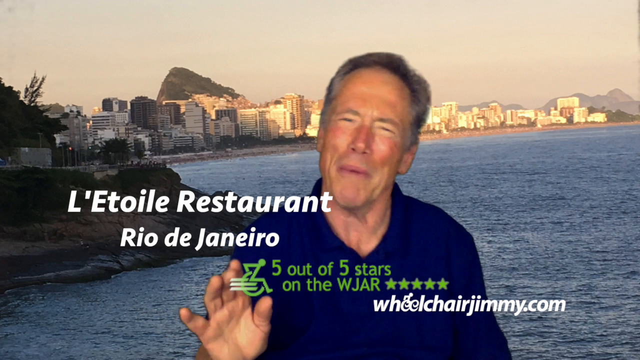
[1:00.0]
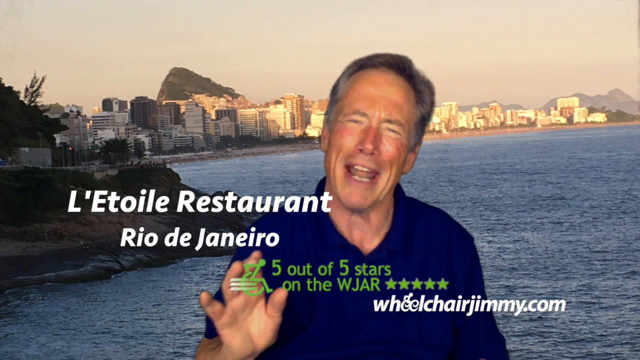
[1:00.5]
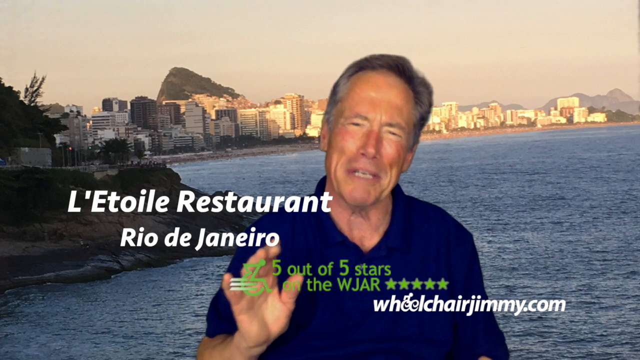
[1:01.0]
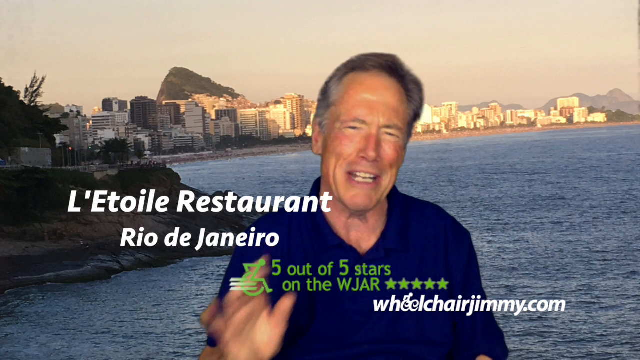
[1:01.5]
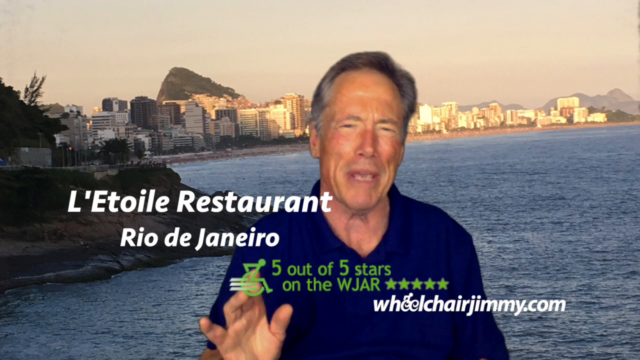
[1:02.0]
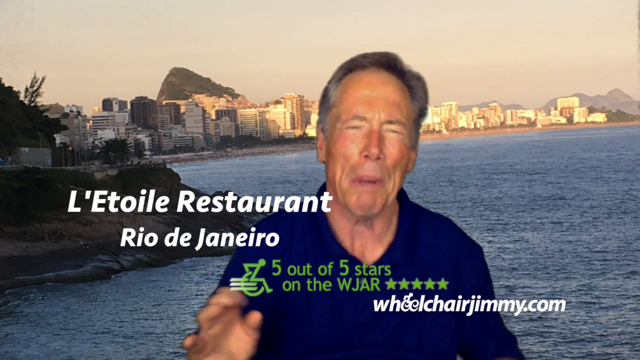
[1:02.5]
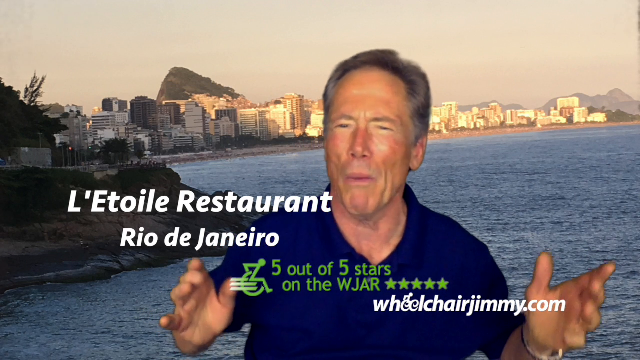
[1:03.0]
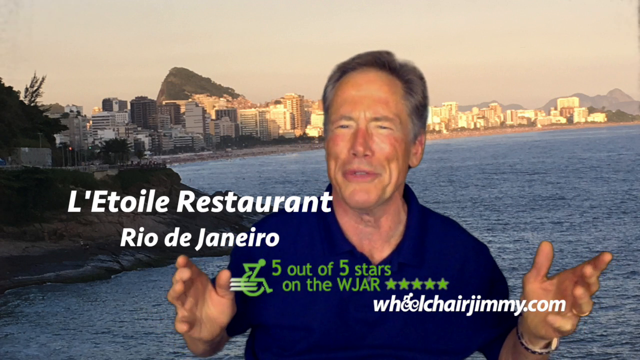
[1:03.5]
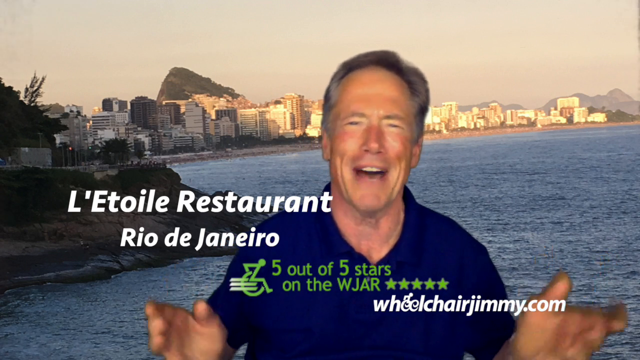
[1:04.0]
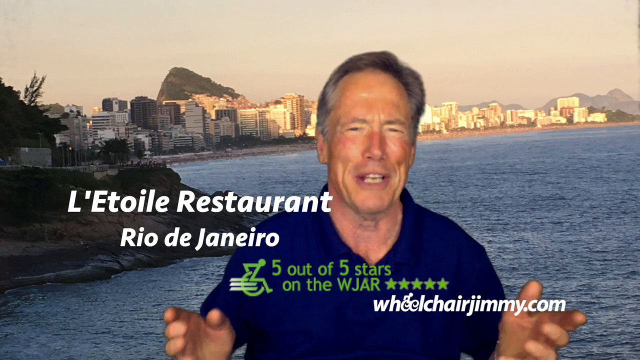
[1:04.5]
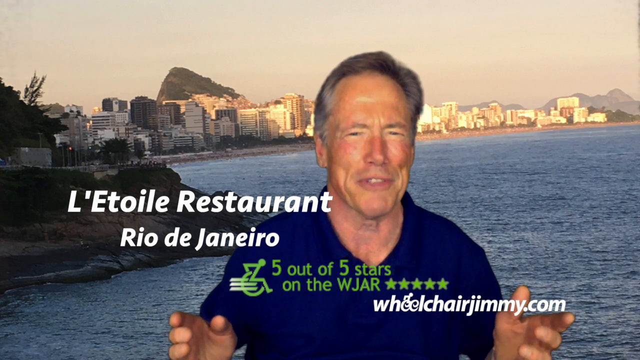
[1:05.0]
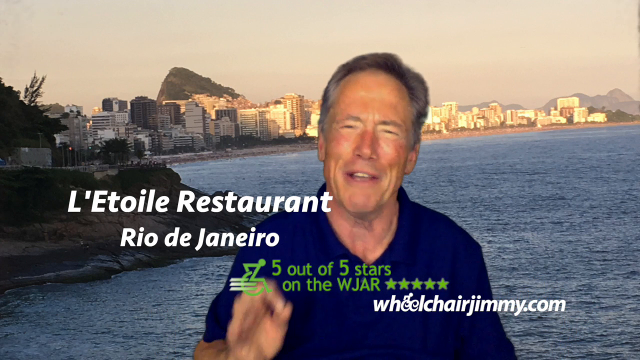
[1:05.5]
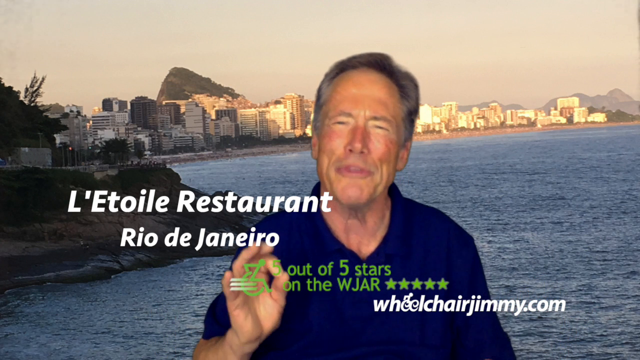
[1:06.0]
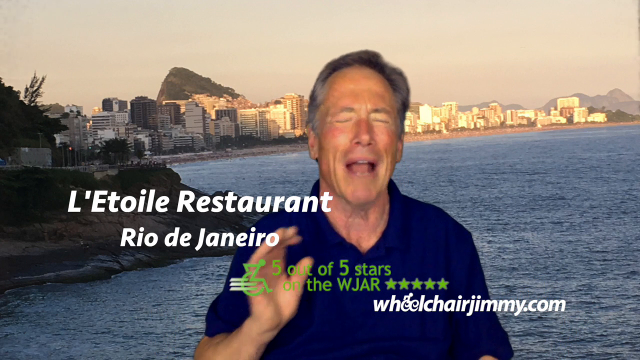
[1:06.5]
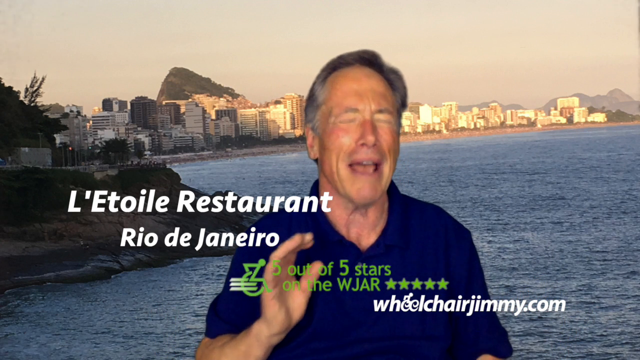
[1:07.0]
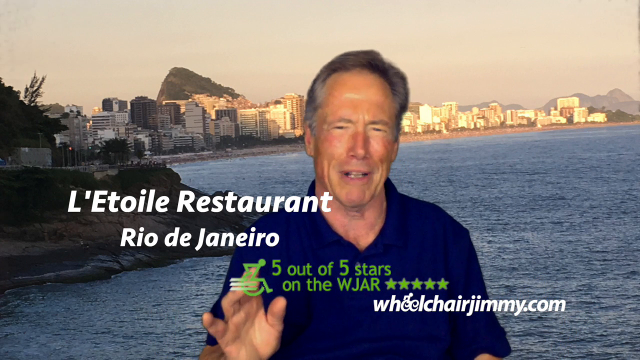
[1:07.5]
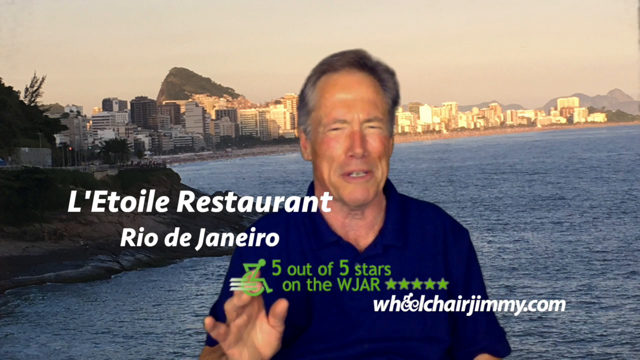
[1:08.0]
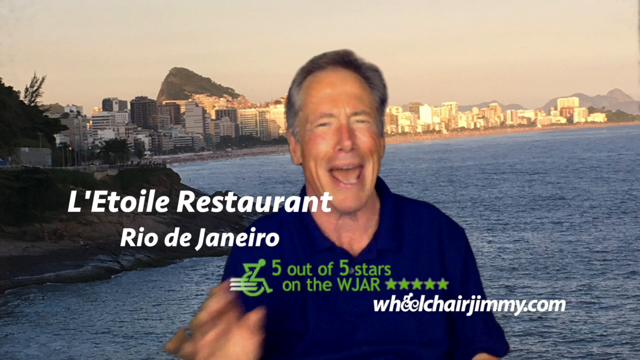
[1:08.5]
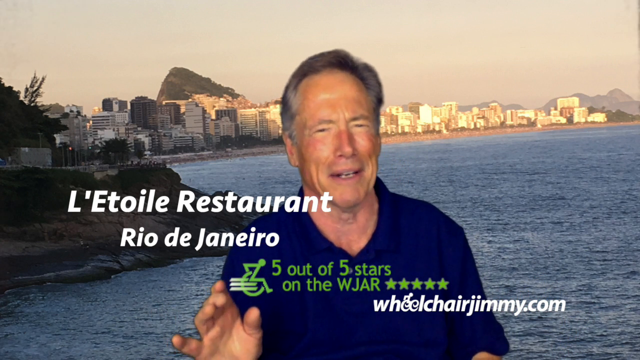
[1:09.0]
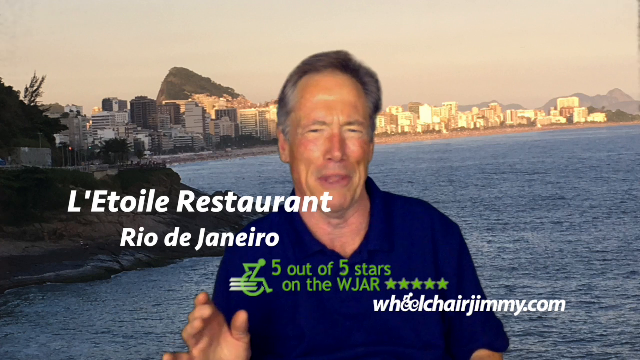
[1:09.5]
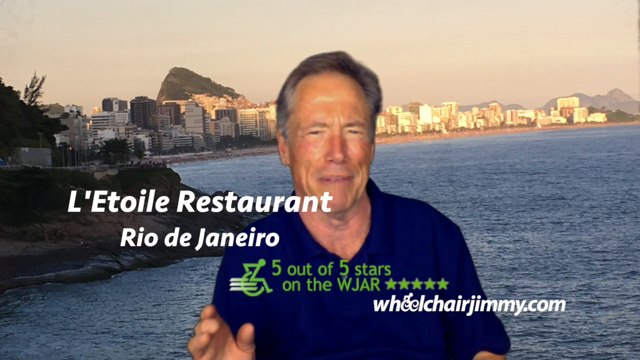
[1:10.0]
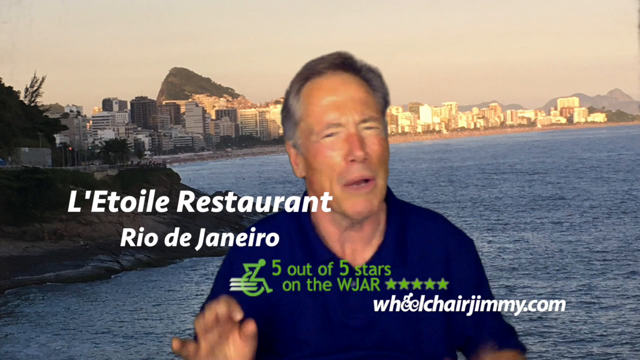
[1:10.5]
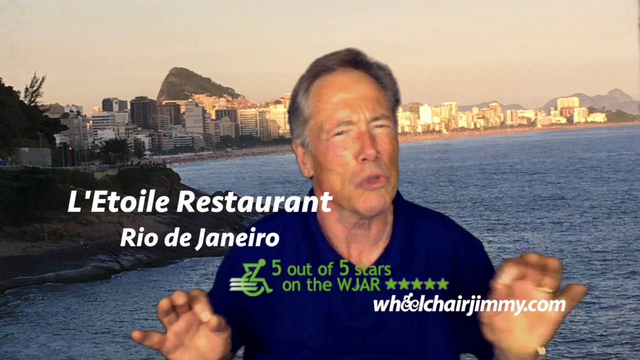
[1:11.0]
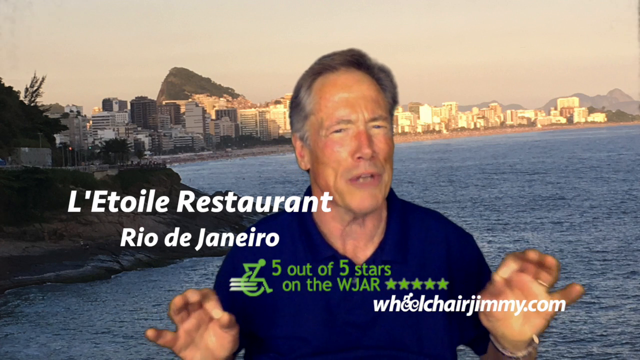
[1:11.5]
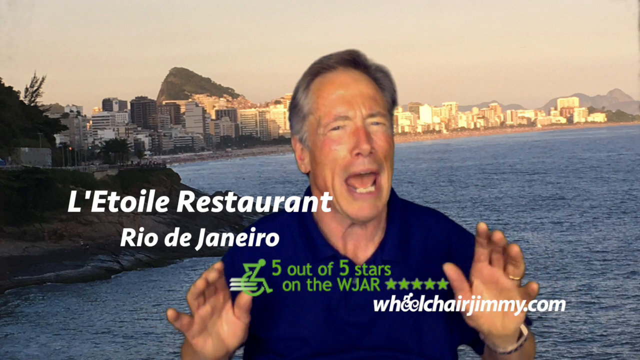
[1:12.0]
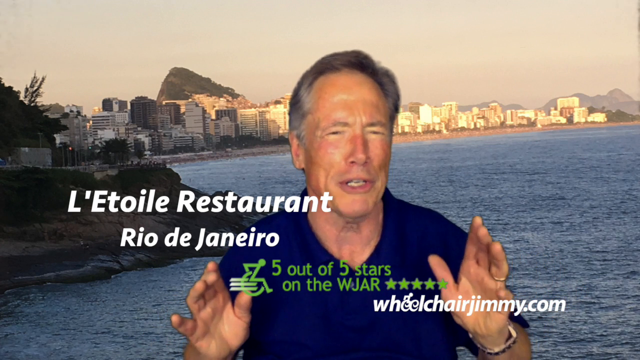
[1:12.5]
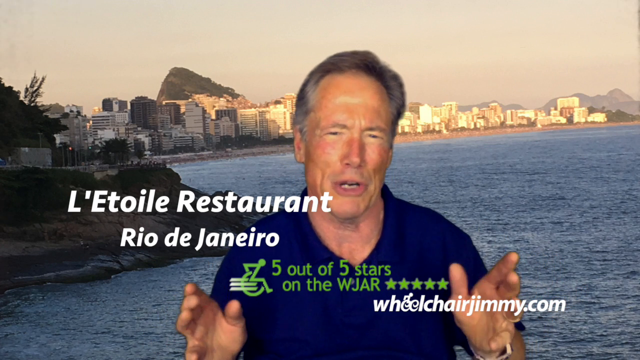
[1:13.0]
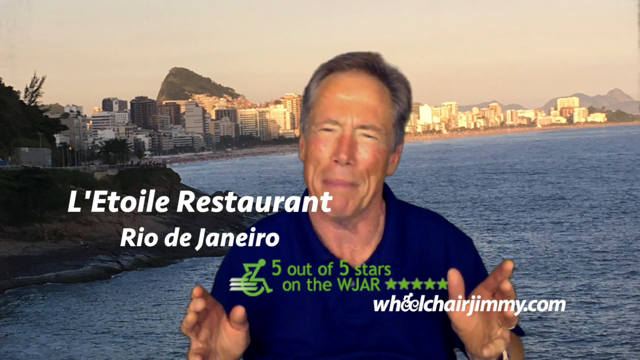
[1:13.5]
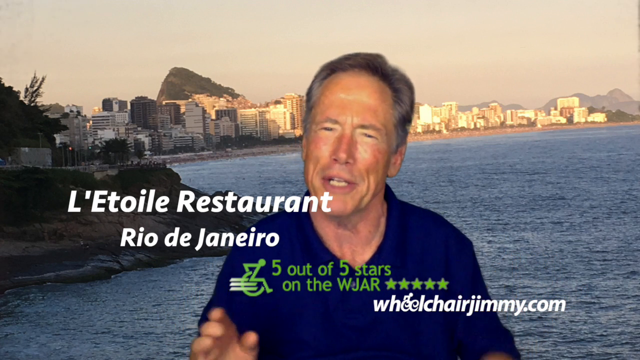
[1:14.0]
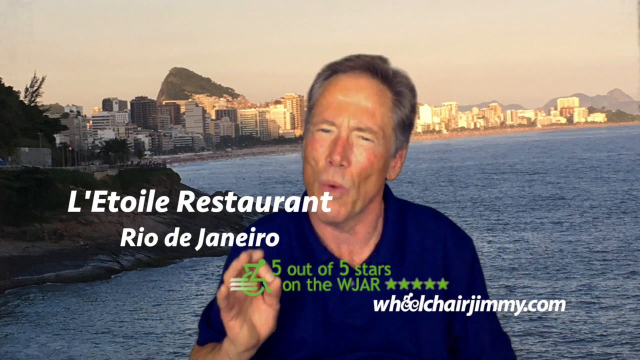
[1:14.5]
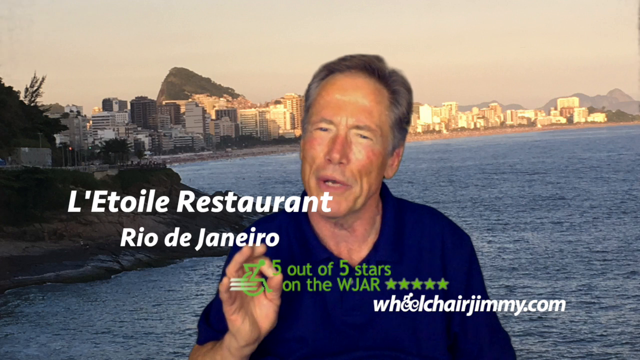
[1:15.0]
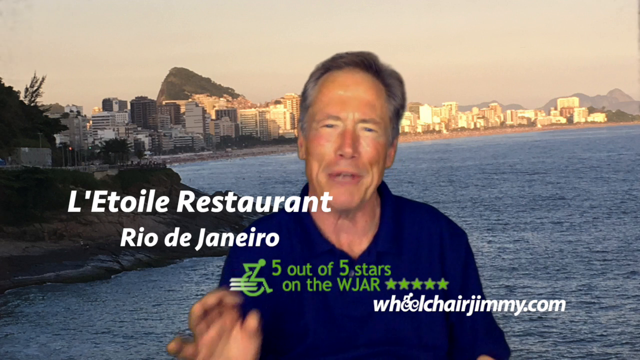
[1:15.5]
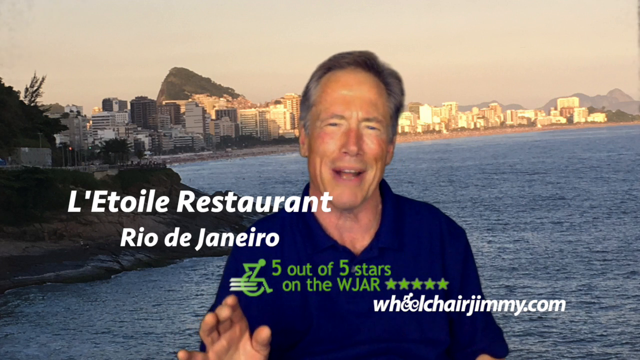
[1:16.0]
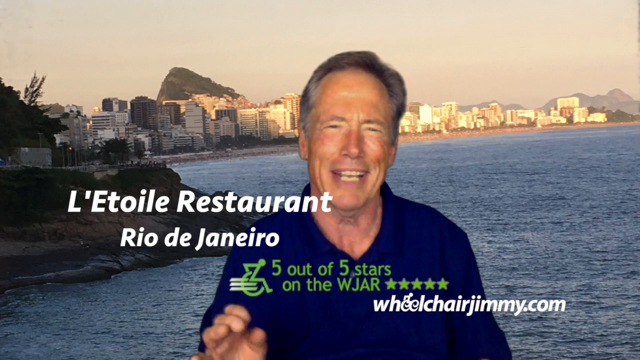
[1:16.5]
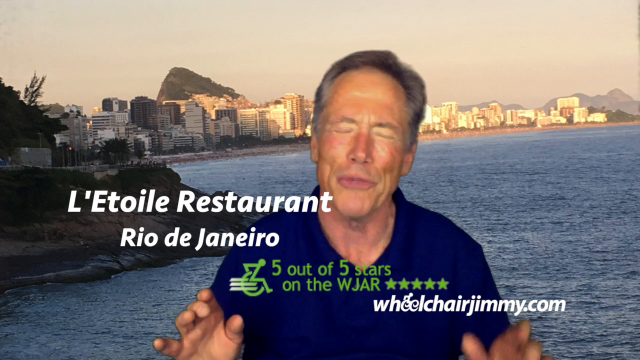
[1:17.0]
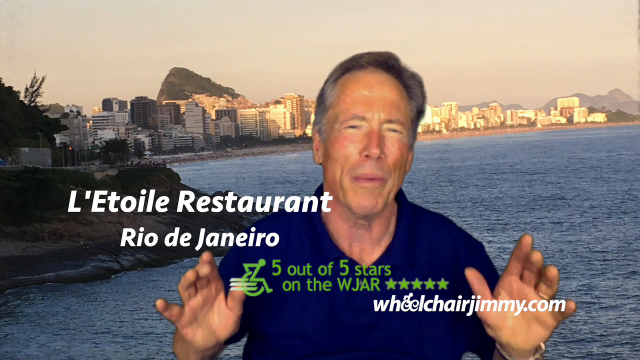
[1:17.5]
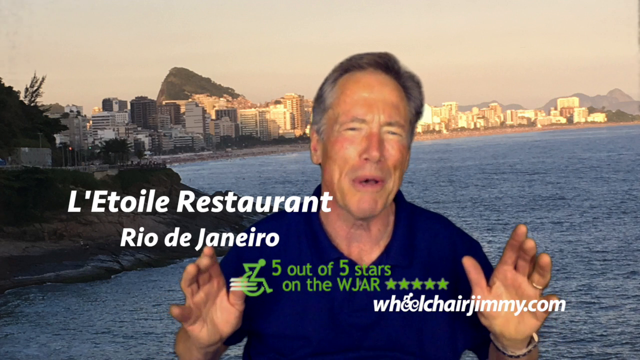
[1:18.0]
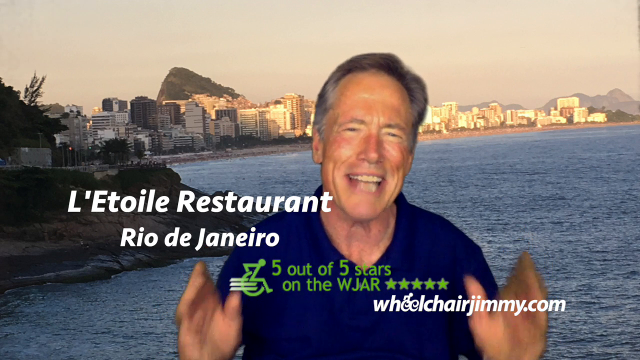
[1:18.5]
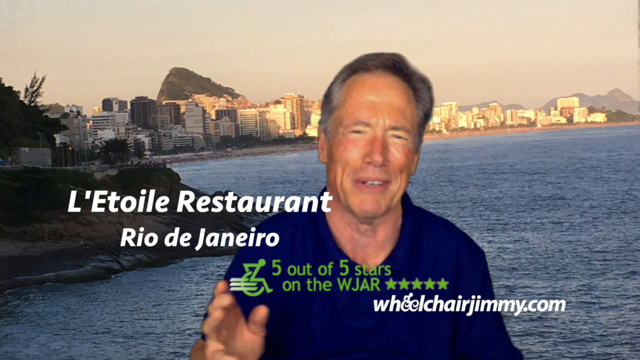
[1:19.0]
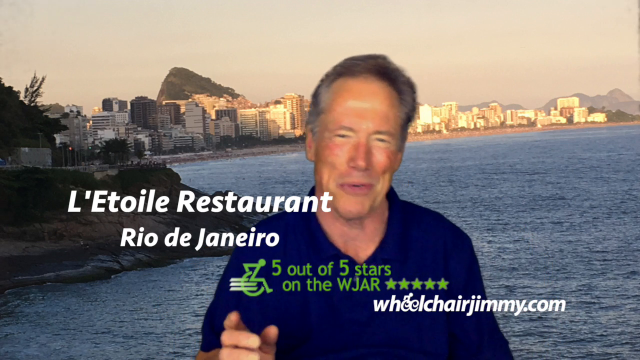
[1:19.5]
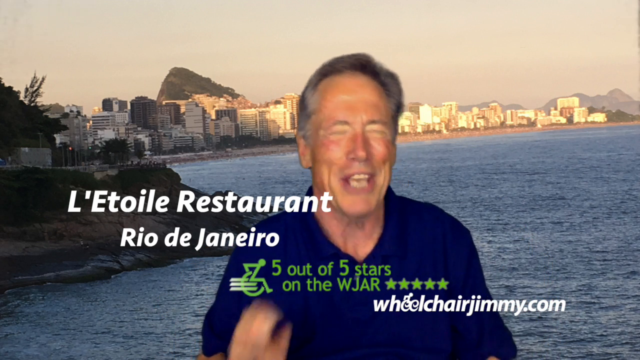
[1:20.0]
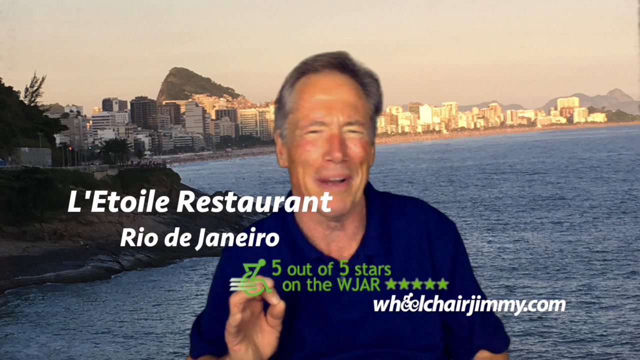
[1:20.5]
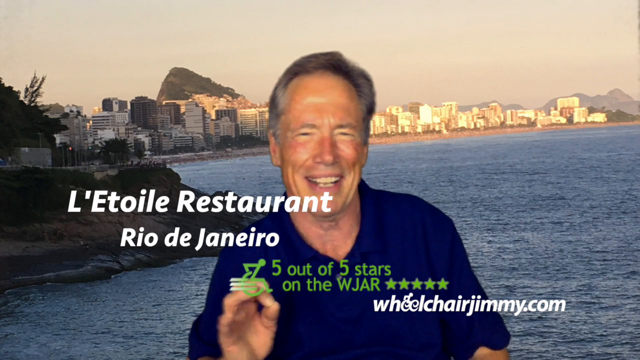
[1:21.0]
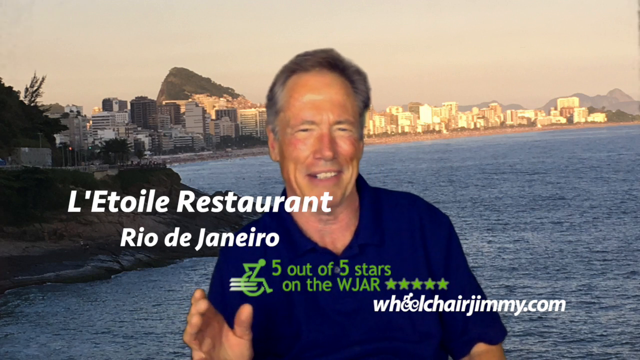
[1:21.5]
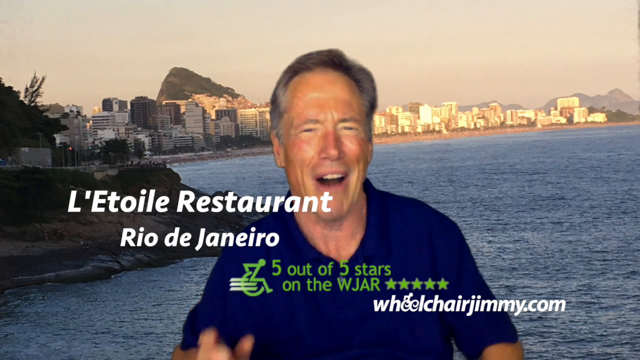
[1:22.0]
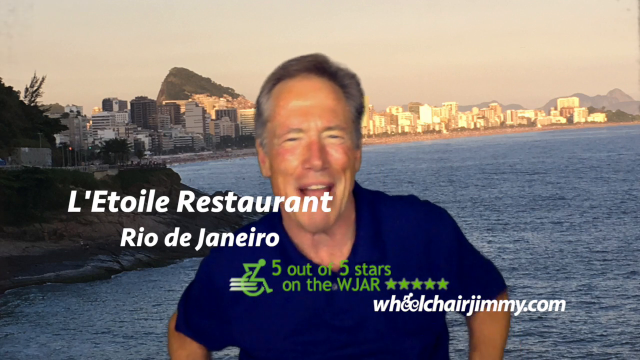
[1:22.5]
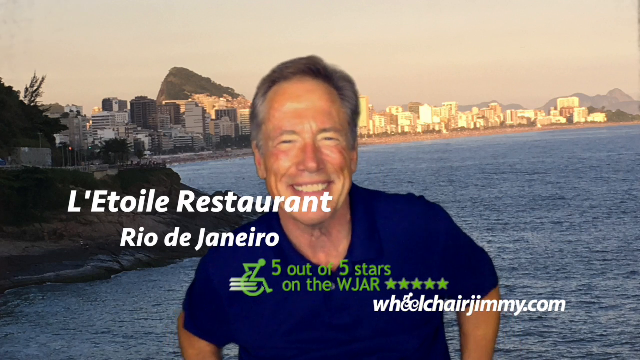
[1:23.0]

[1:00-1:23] The man in the navy blue shirt is speaking in front of a screen showing an image of a beach with a city in the background. On screen are the words "L'Etoile Restaurant, Rio de Janeiro," and in the bottom right corner it says "Wheelchair Jimmy." Between these, it now says "5 out of 5 stars on the WJAR," with five stars next to it and, to the left of that line, an image of a wheelchair that appears to be moving. That line is written in green, while the rest of the text is white. The man appears to be speaking quite passionately, moving his hands quite a bit; he is likely talking about the restaurant named on screen, possibly reviewing restaurants and how wheelchair accessible they are. The video ends with the man still smiling.